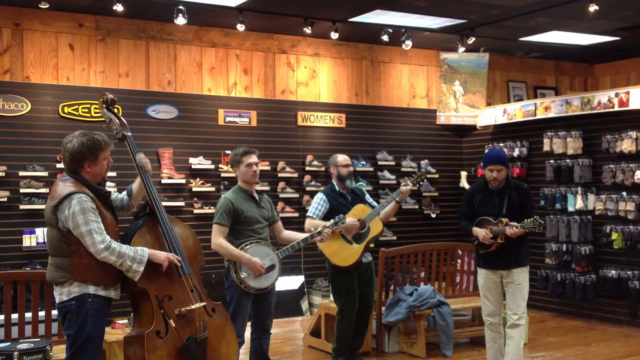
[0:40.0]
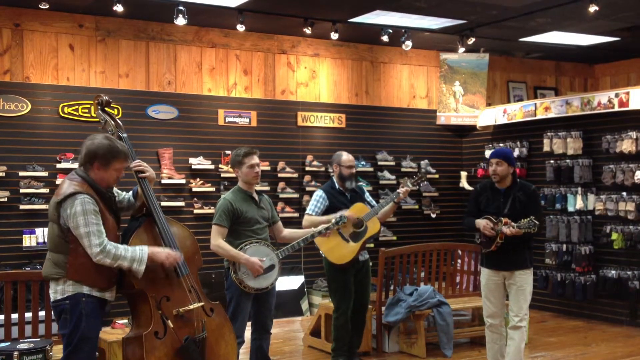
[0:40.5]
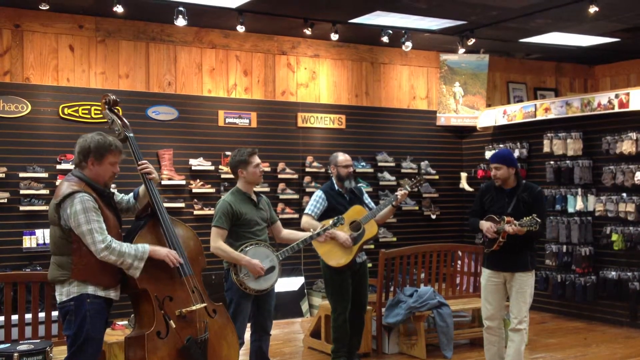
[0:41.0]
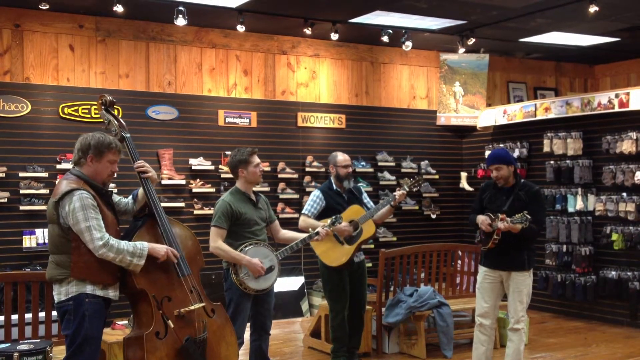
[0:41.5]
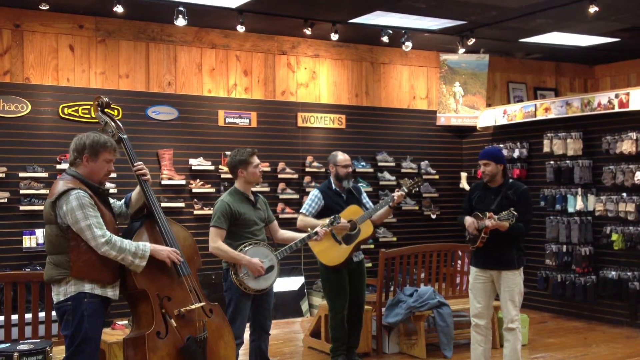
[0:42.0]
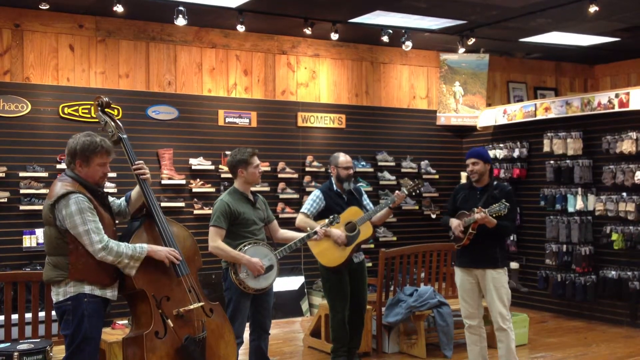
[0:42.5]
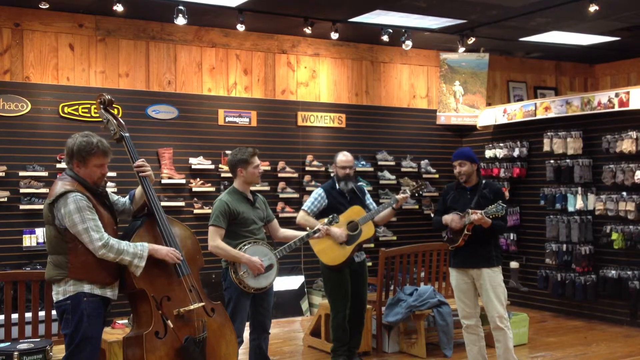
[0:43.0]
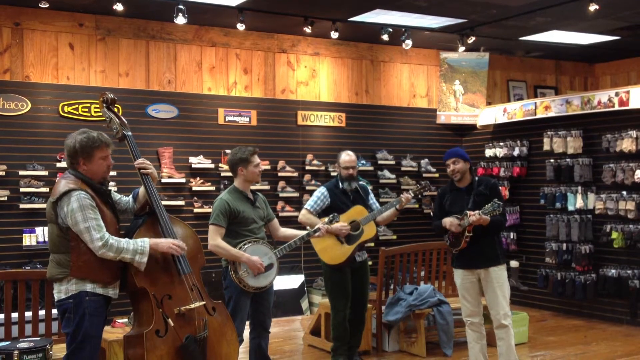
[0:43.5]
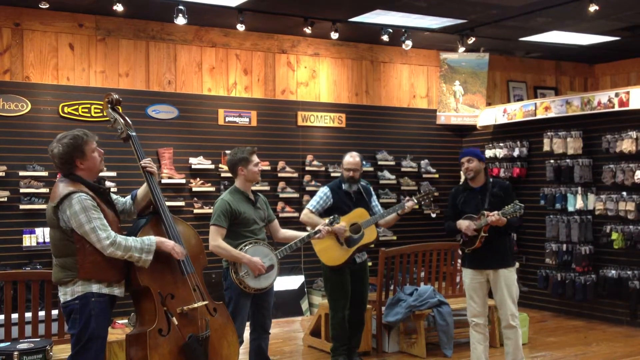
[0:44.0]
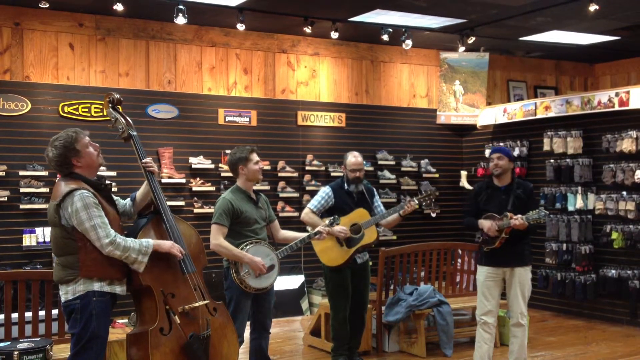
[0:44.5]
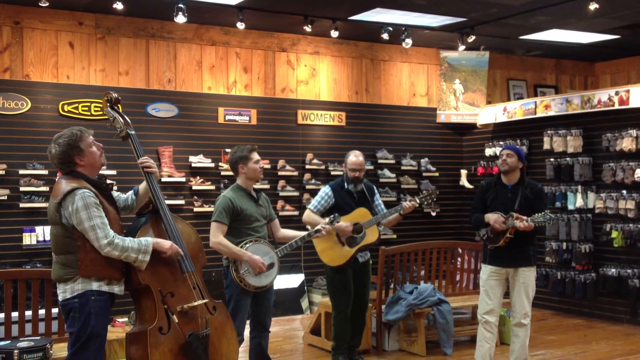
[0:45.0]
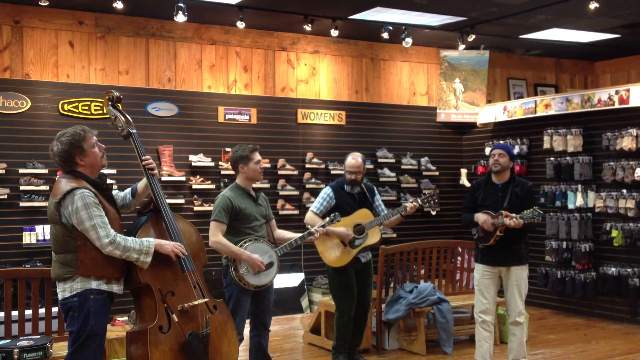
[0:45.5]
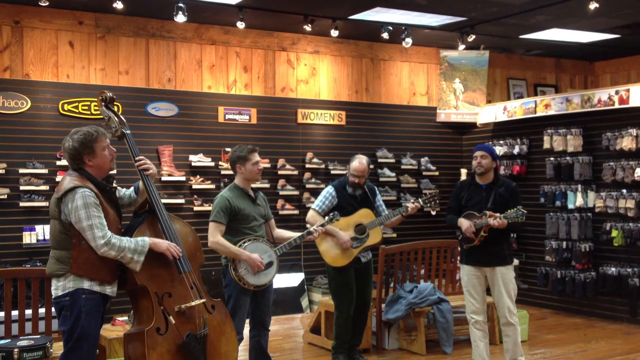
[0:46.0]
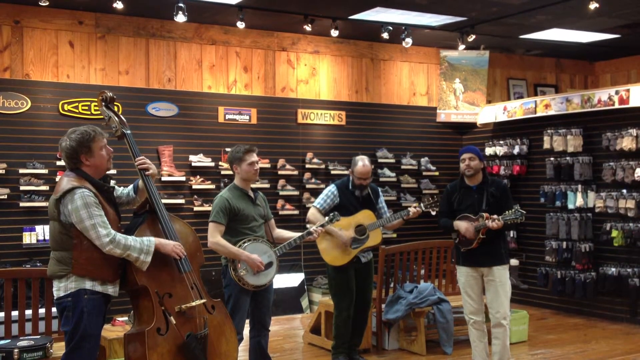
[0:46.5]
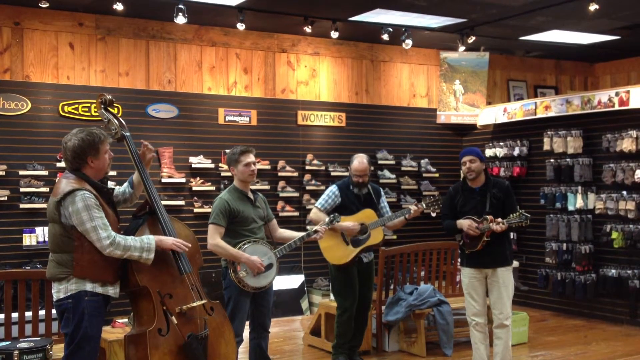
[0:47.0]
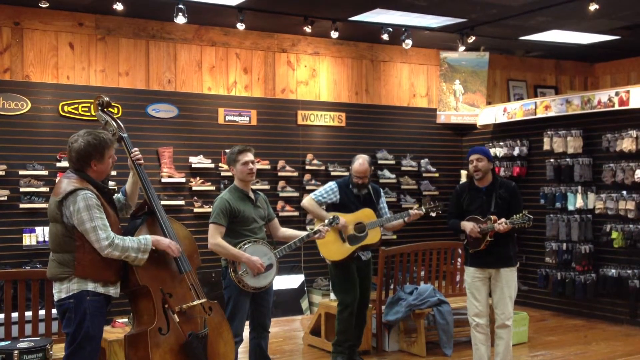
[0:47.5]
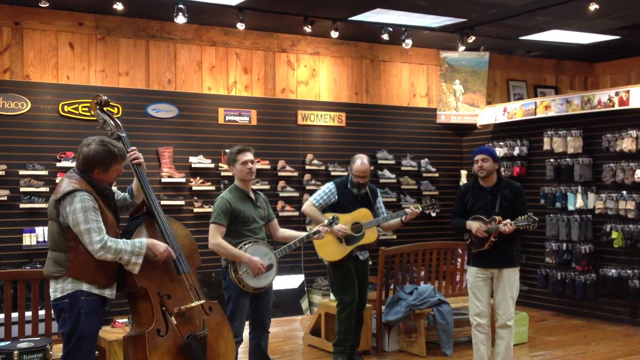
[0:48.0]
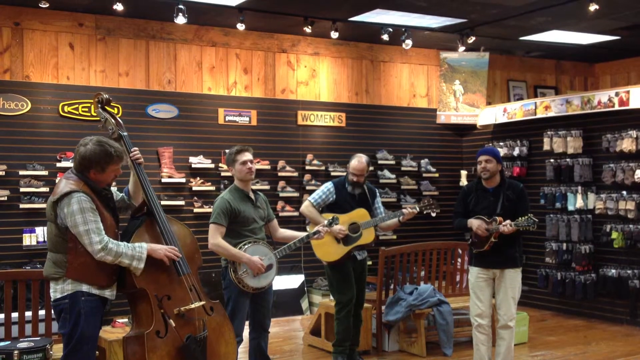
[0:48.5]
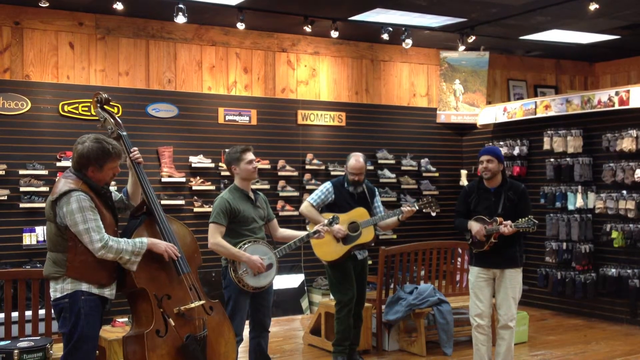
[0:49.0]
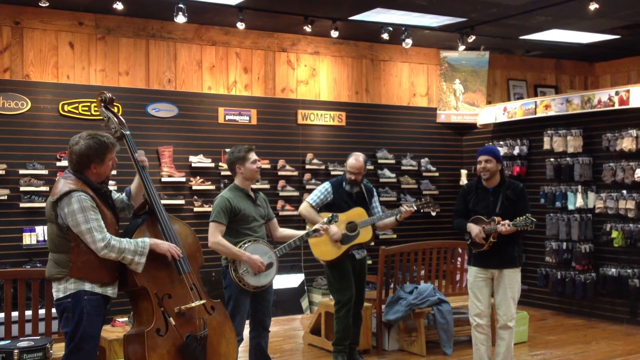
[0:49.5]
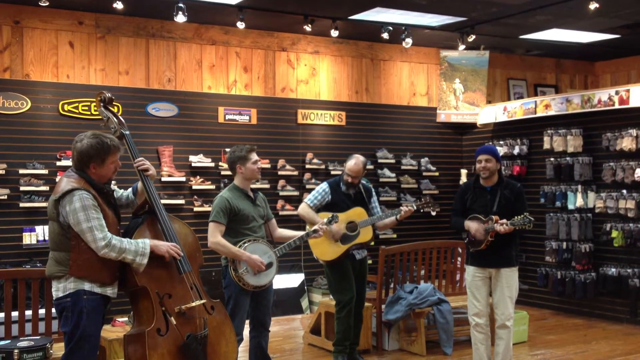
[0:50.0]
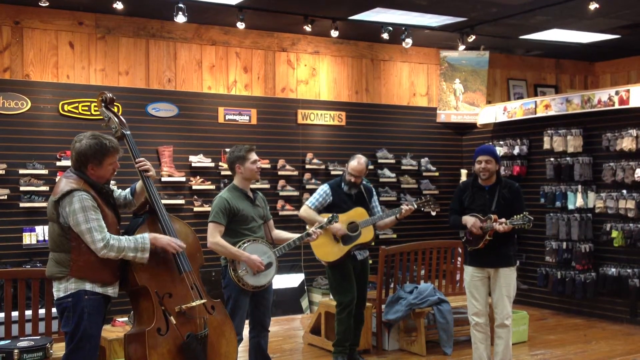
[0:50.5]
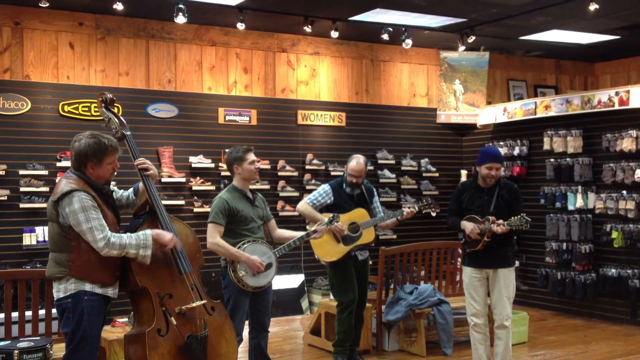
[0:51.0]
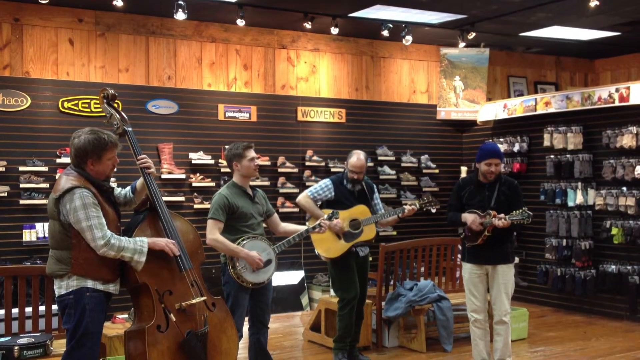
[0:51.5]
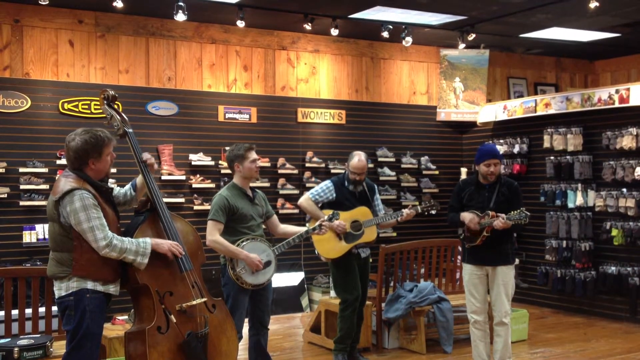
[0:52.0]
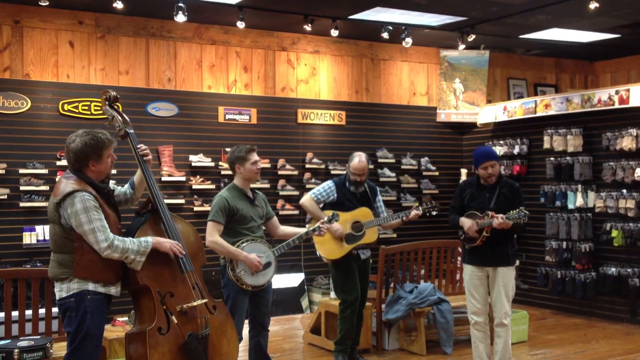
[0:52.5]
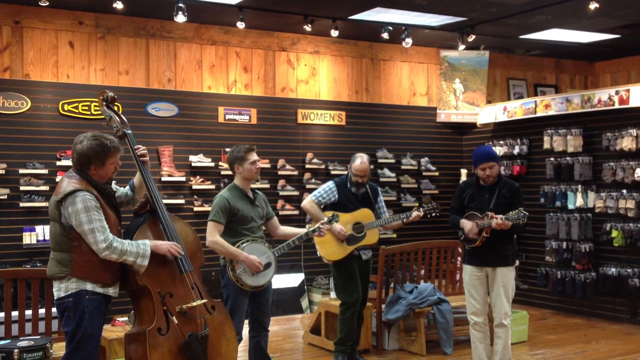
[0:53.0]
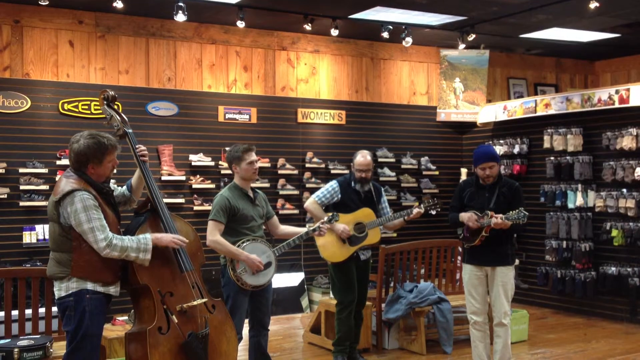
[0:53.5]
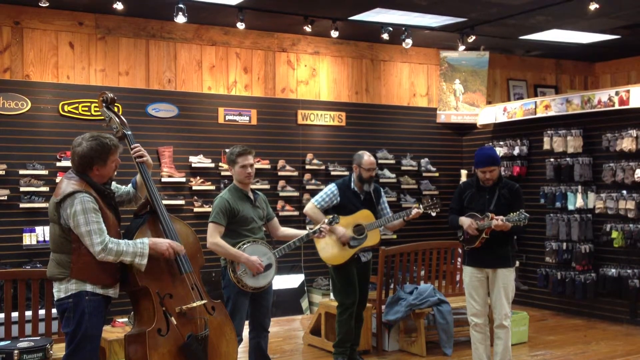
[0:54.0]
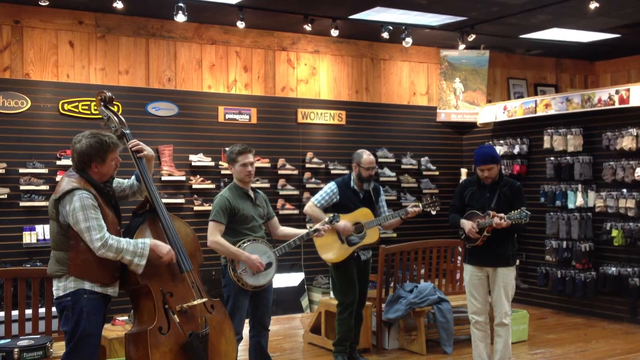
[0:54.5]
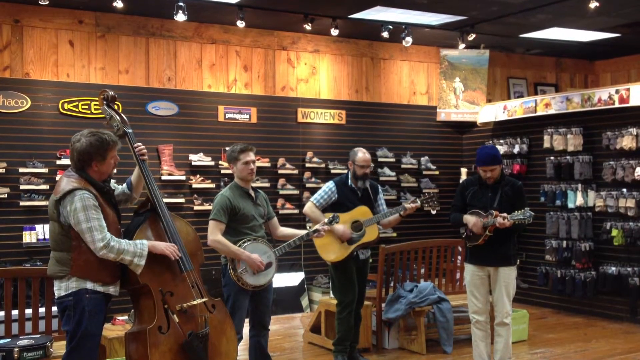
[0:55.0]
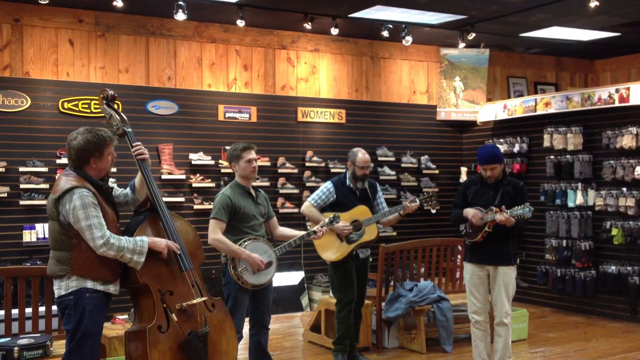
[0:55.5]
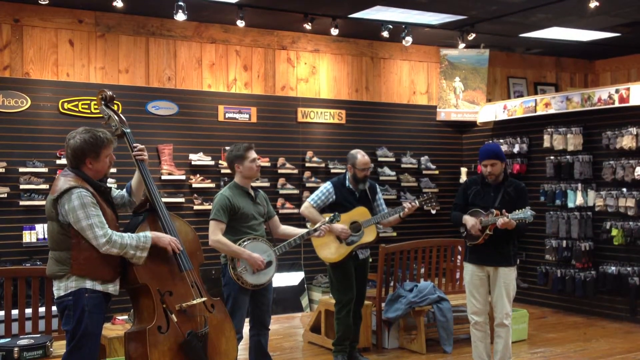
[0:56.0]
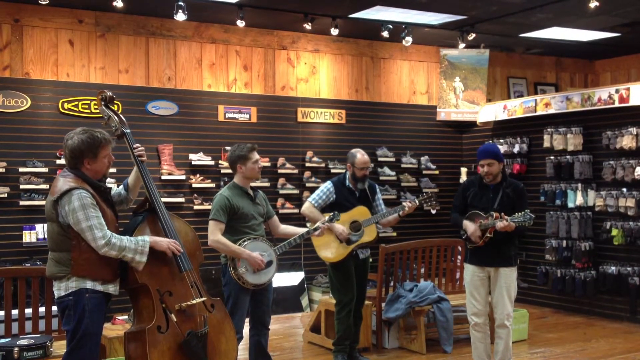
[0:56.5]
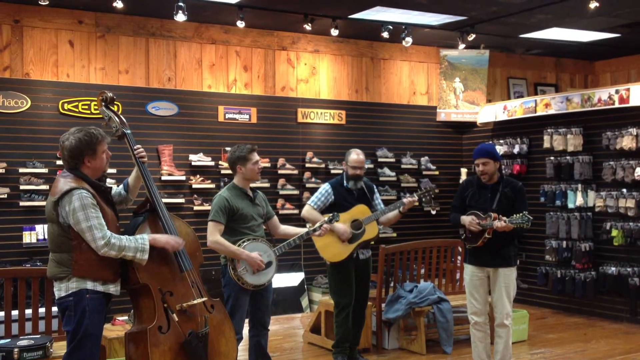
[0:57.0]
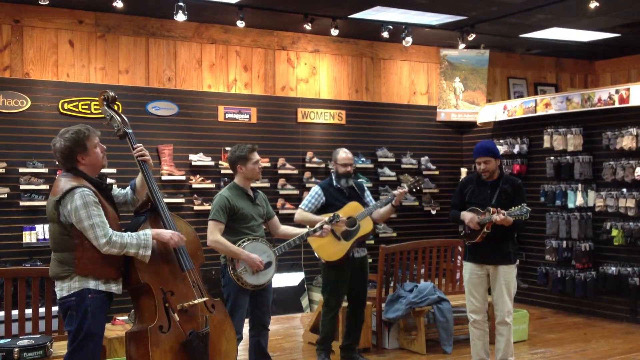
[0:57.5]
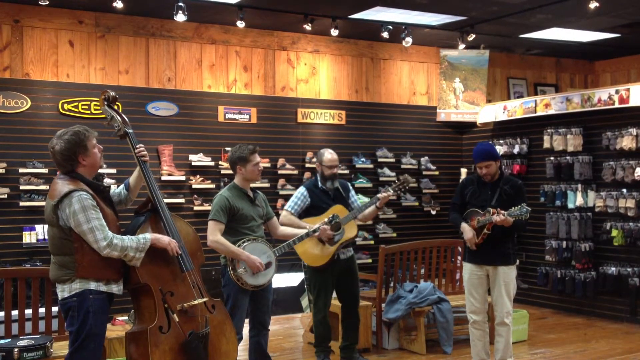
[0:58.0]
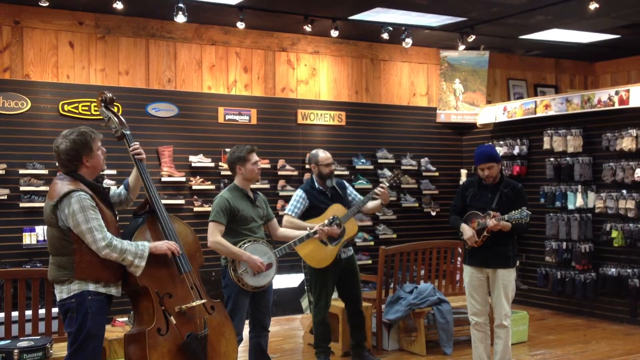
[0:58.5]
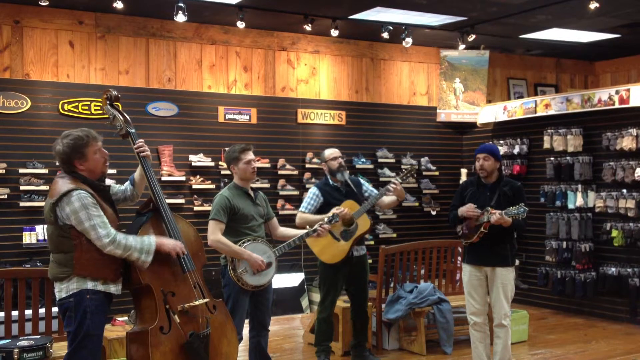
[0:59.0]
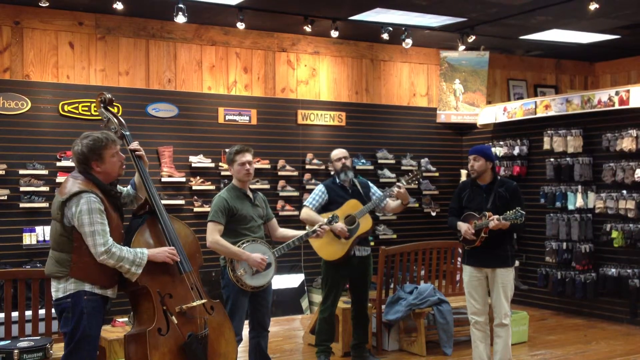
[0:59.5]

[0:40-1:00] The four men continue to play and sing. The song appears to change, either to a new song or within the same song, and it seems less upbeat. The men move less and are more subdued as they play and sing. The man with the shorter guitar and the man with the acoustic guitar are still singing, and all of them keep playing. They look toward the one man less than before, seem to feel the music more internally, and kind of groove along, clearly having a good time.